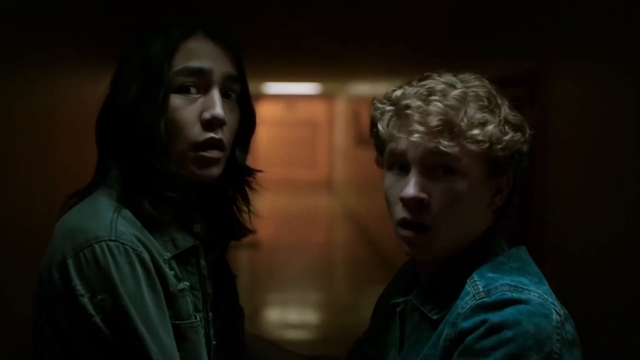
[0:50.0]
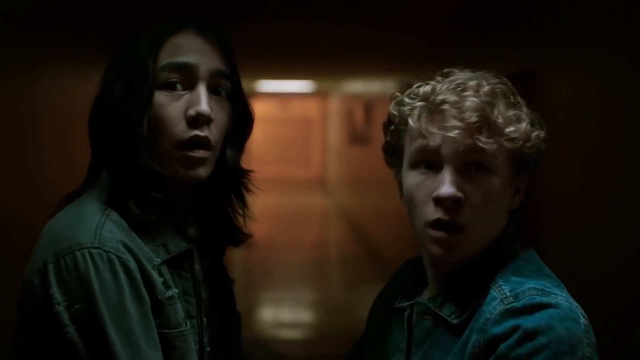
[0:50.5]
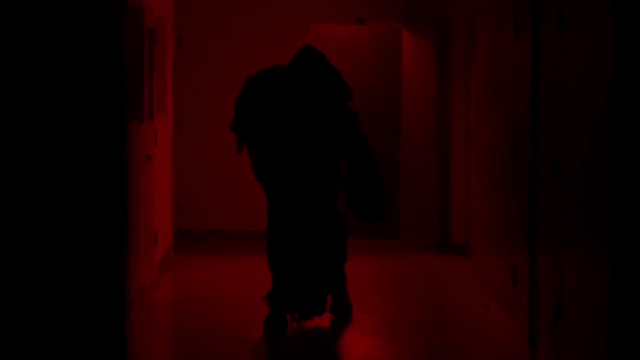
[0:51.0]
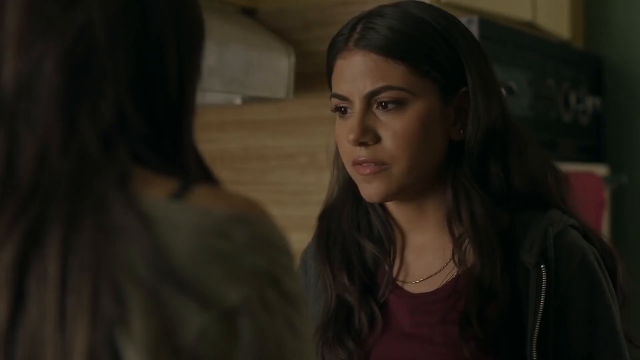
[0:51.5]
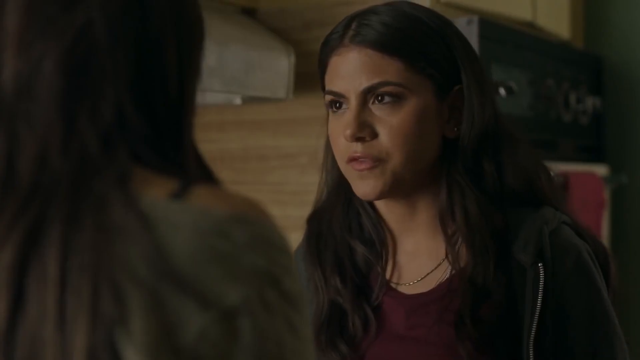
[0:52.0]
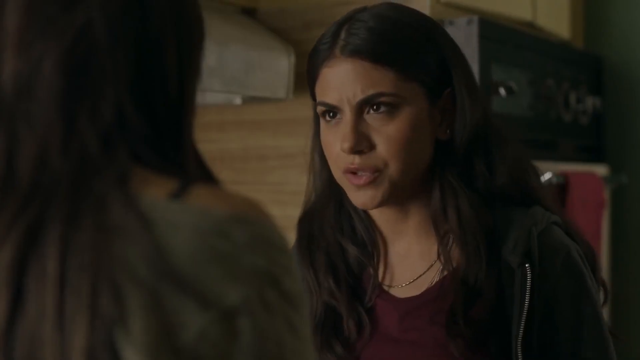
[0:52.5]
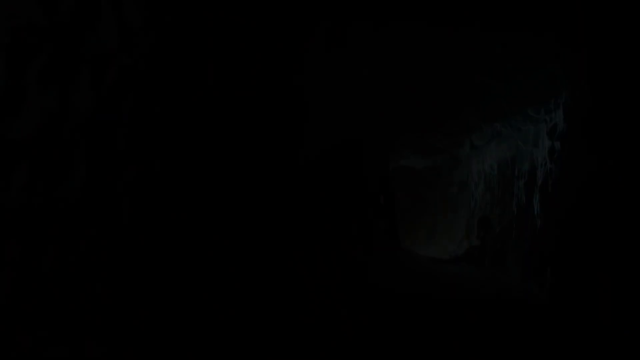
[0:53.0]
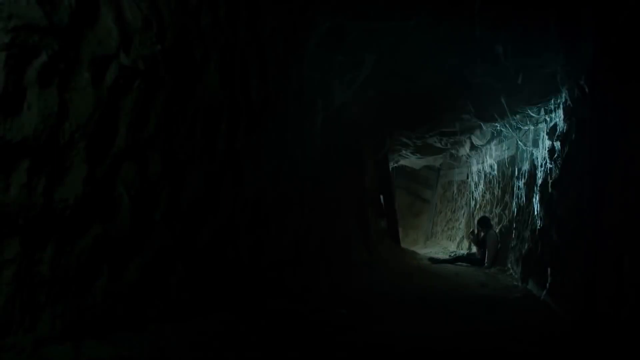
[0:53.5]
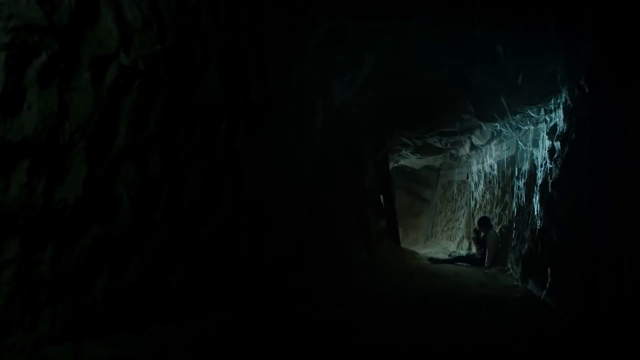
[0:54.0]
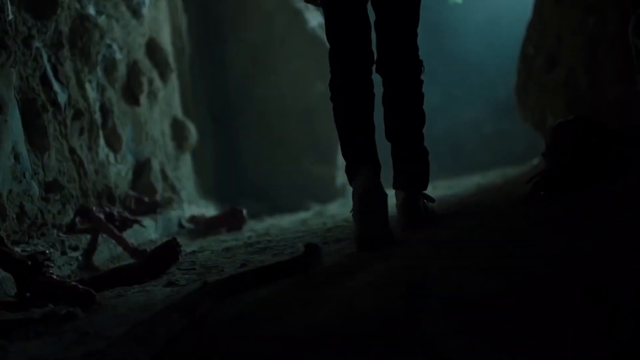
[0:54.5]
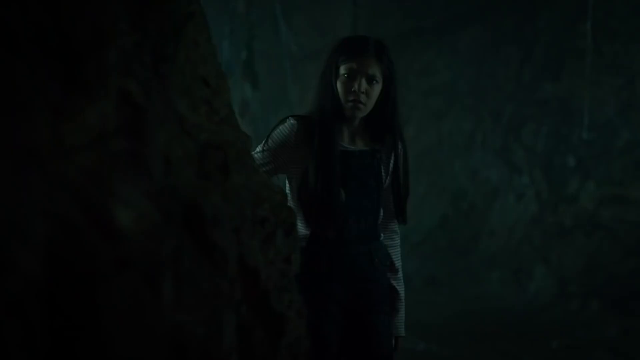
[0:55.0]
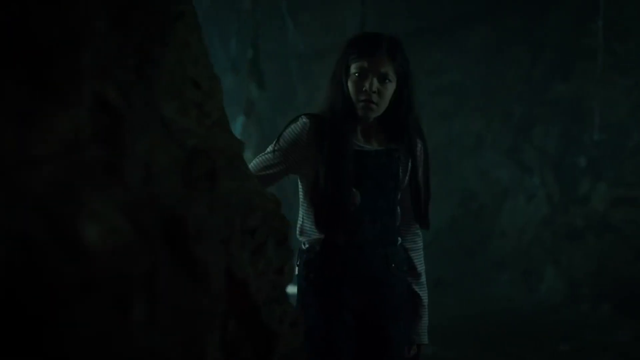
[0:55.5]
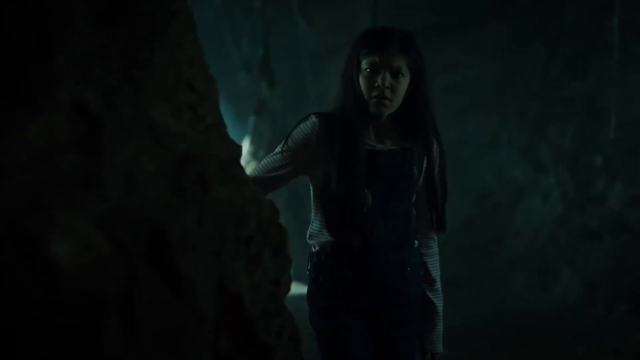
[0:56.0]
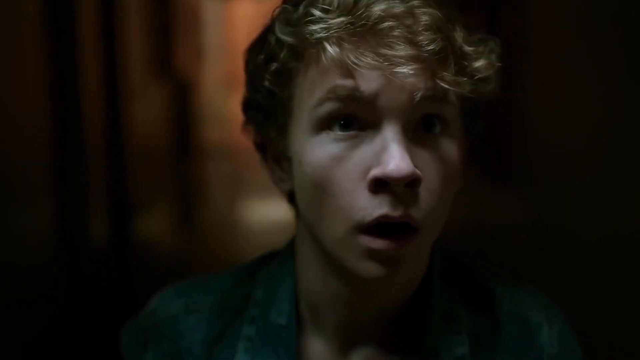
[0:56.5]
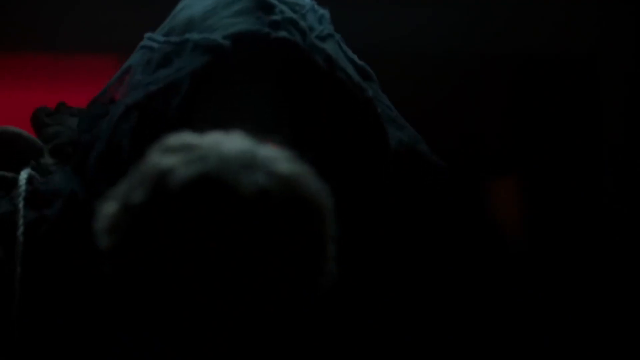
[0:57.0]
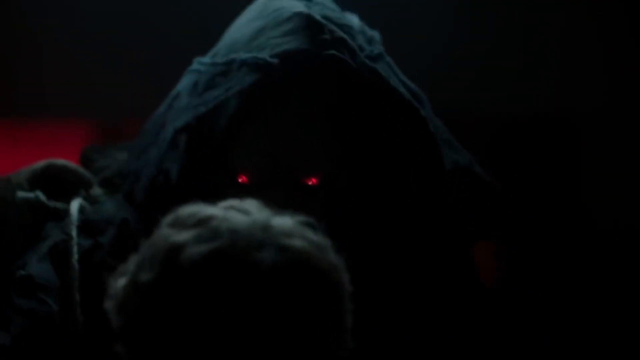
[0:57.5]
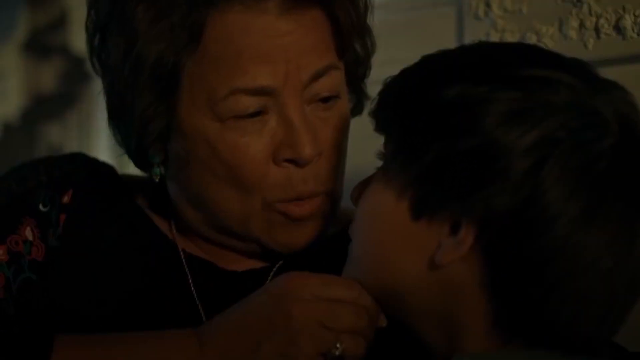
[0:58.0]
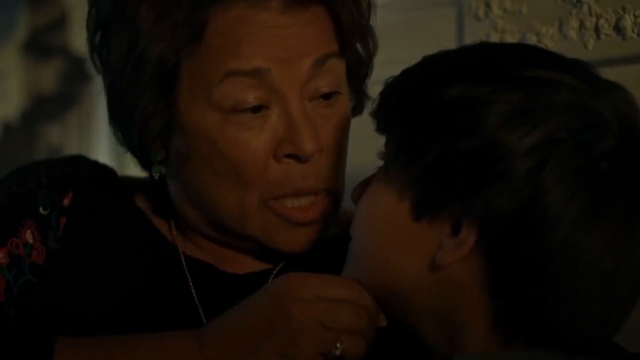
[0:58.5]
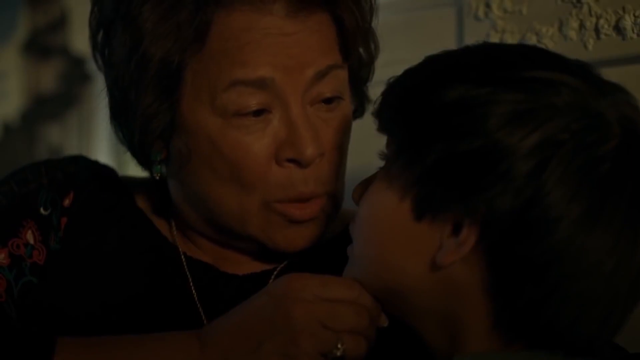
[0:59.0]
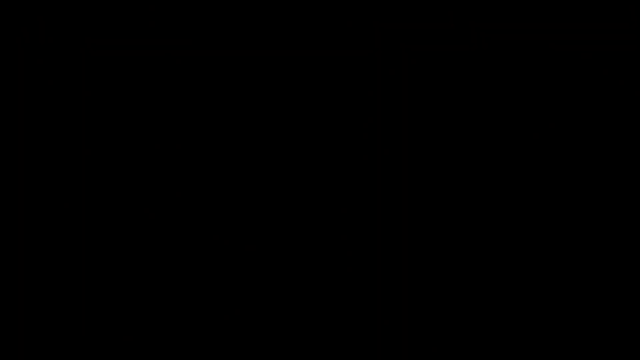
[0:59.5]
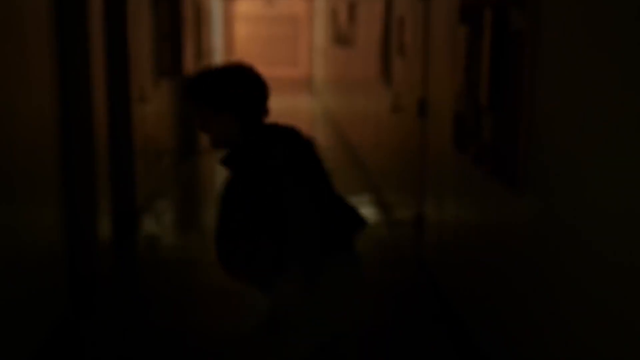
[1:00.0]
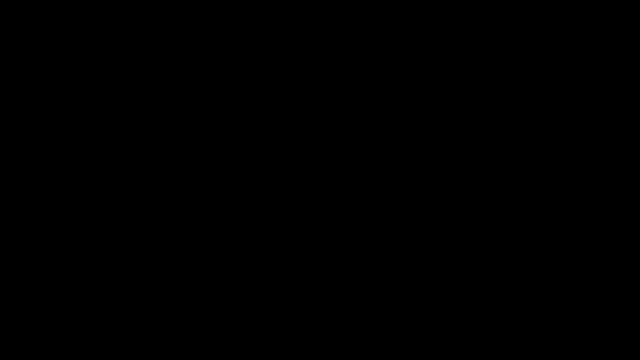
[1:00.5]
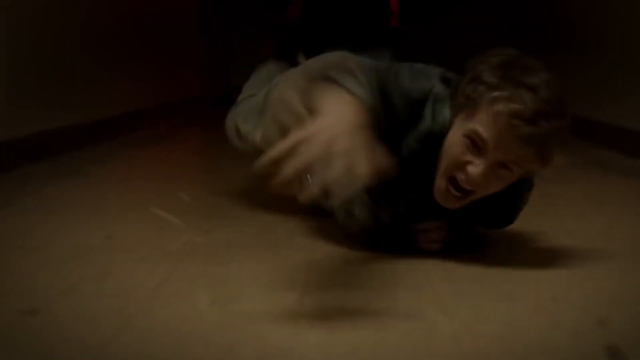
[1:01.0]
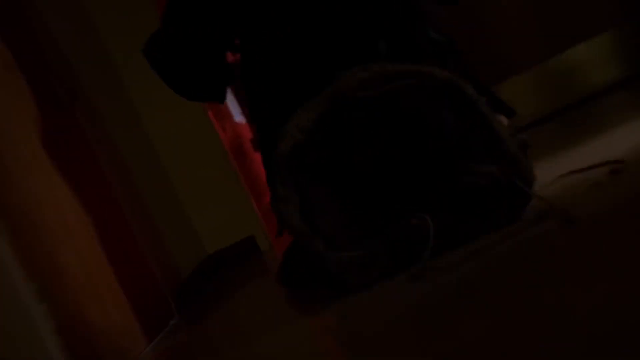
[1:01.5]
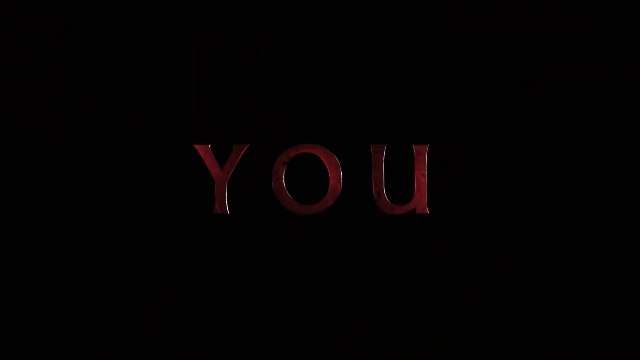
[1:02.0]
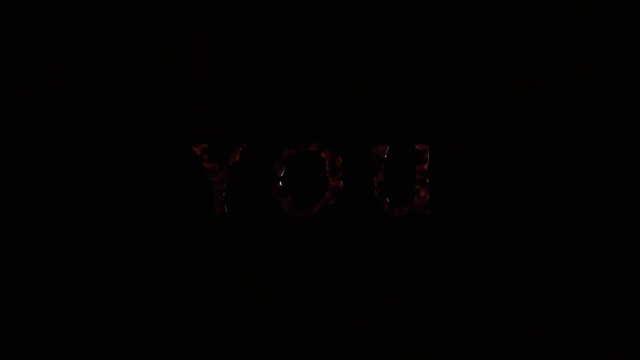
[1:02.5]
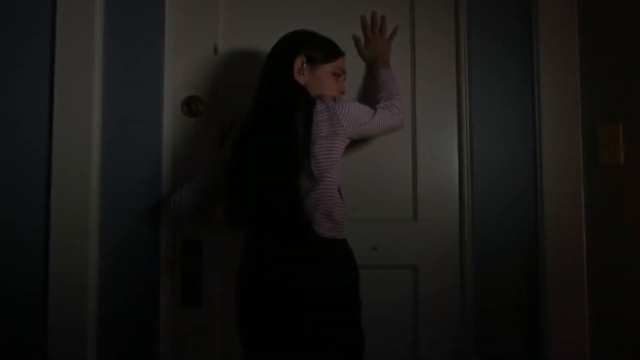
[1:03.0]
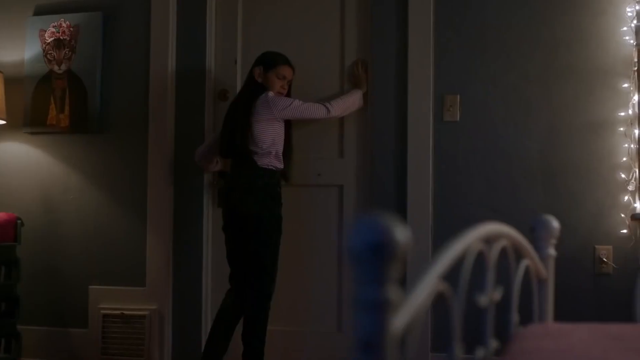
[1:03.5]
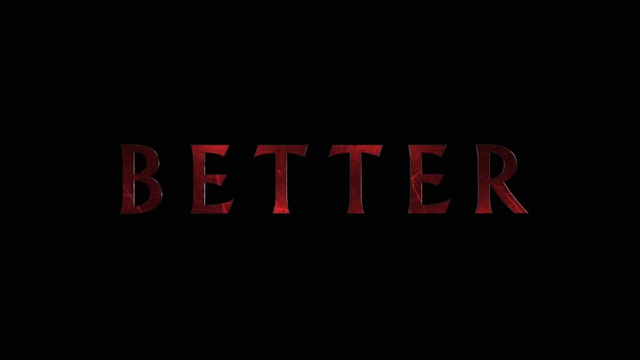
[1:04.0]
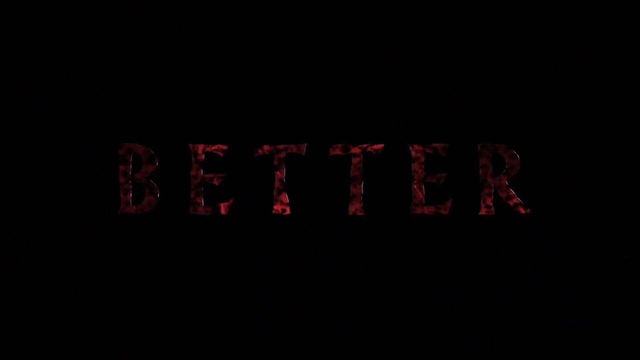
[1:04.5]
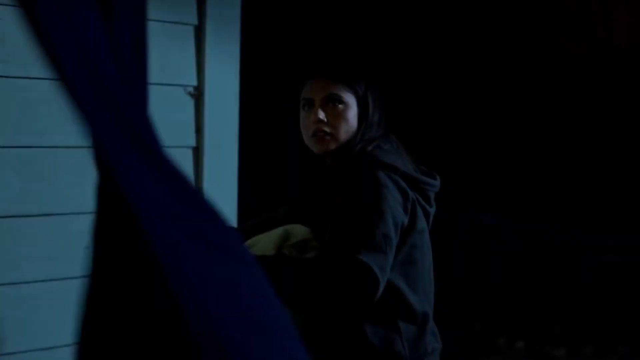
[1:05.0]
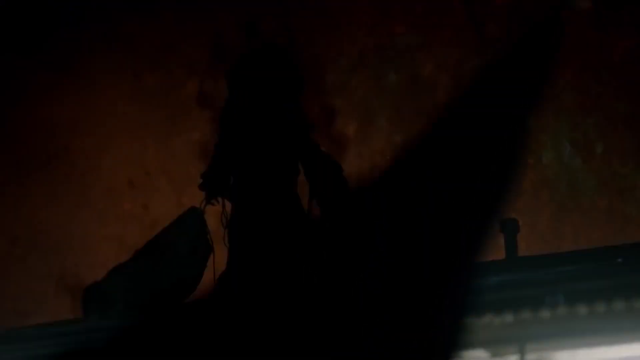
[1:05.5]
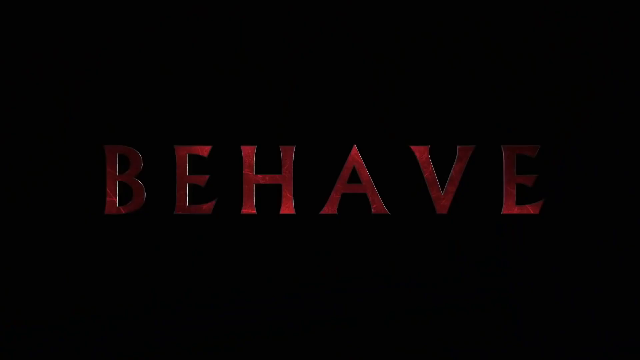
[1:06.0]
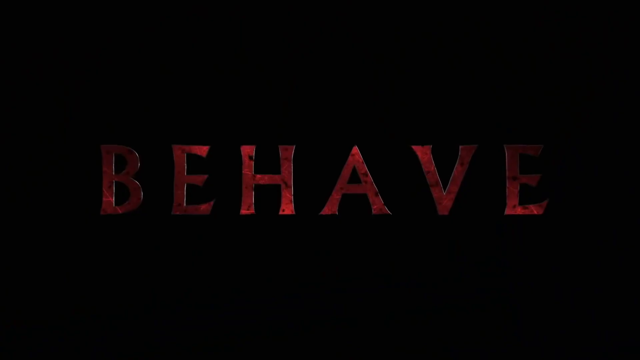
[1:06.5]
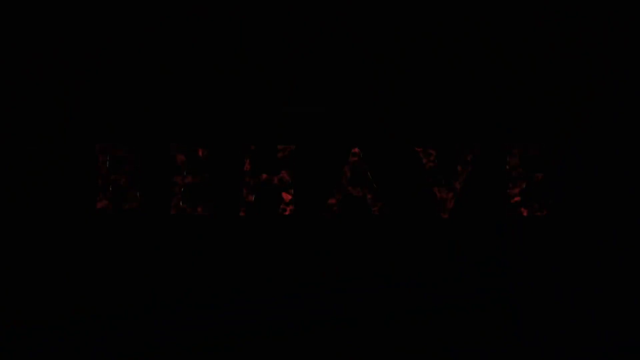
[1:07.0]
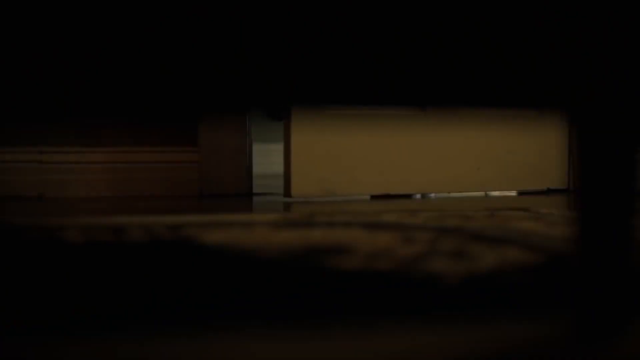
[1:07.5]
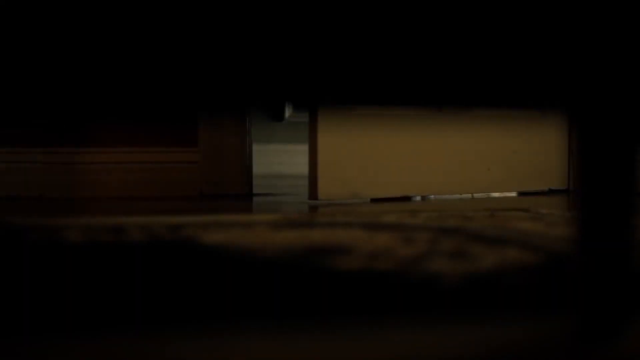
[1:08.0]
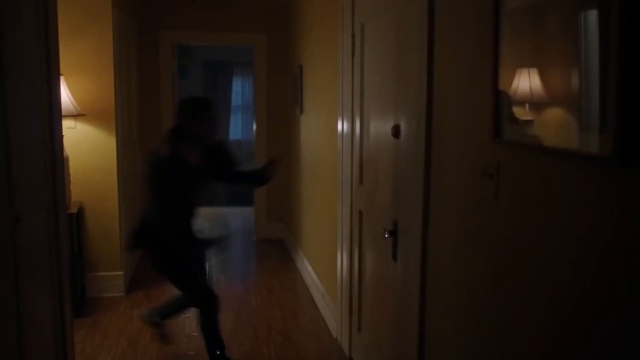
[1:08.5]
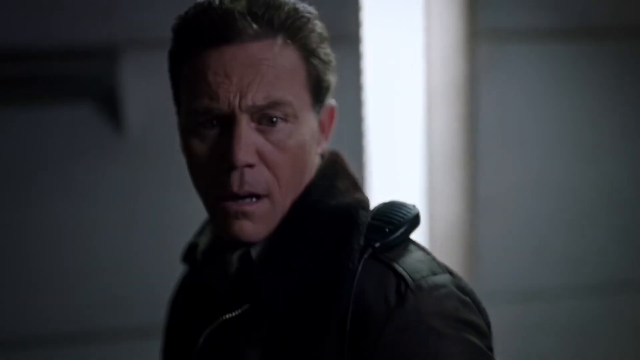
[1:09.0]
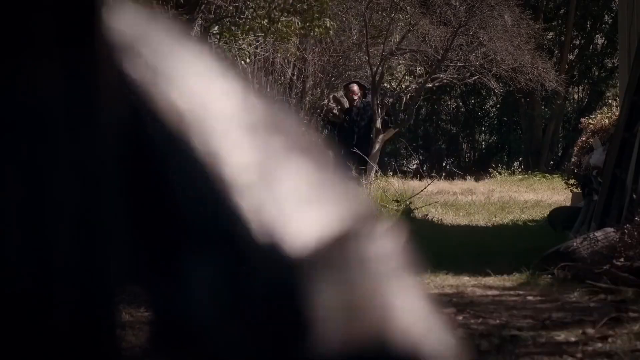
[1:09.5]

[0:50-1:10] Two people, both wearing denim jackets, one with short curly blonde hair and the other with long black hair, turn their heads toward the camera with scared expressions. A shadowy figure walks down a hallway with red lights. Two women have a conversation inside a house, one in a gray T-shirt and the other in a dark hoodie with a maroon T-shirt. The inside of a cave is shown with a figure sitting down, and then a girl walks through the caverns of the cave. A boy with curly blonde hair stares straight ahead, looking frightened, face to face with a hooded figure with glowing red eyes staring back at him. An older lady with gray hair speaks to a younger boy; they are face to face, looking into each other's eyes as they talk. A man in a hallway is chased by a hooded figure; he trips and falls, and the figure grabs the back of his foot and drags him away. The boy in the jacket claws at the ground in front of him to escape. Red text that says "you" appears on a black background. A girl in a pink striped shirt stands against a doorway with her right hand raised into the air, resting on the top of the door. Red text appears that says "better". A woman in a dark hoodie is outside of the house with her head turned toward her left shoulder, looking up in the air at a shadowy figure standing on a roof. Red text appears that says "behave".